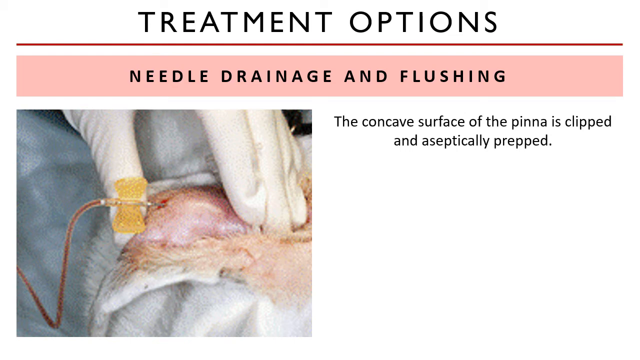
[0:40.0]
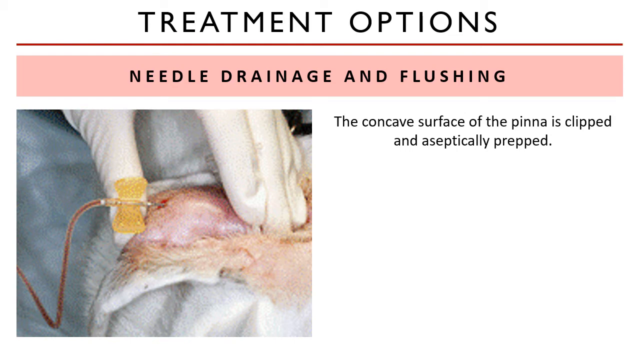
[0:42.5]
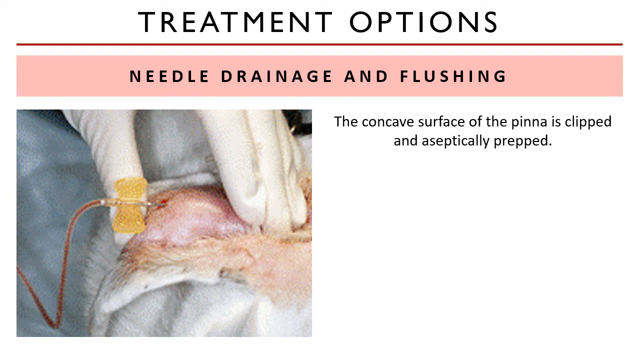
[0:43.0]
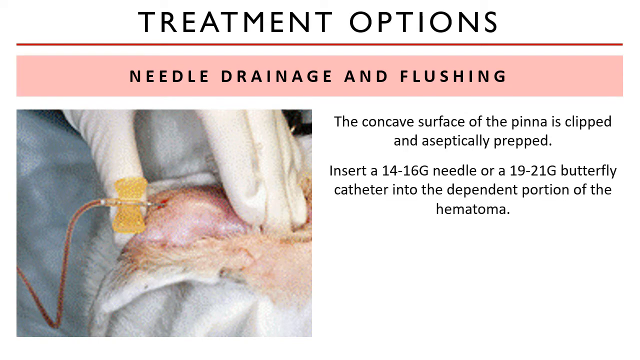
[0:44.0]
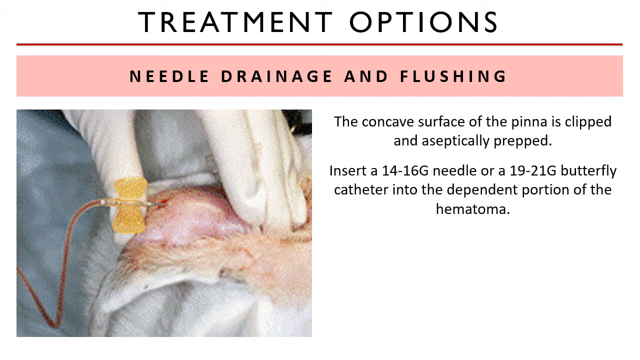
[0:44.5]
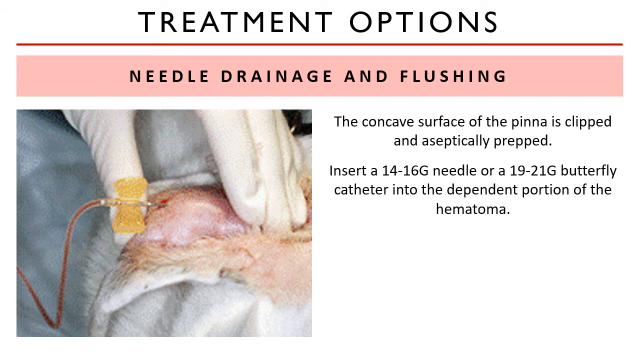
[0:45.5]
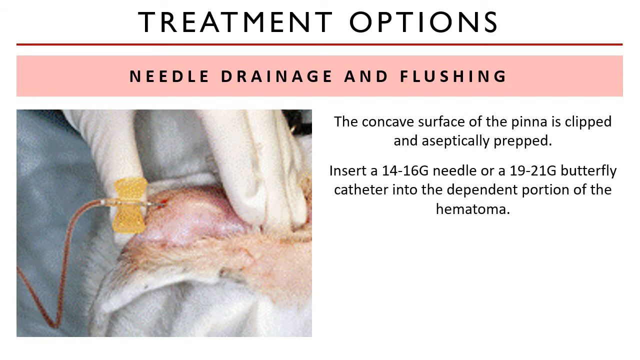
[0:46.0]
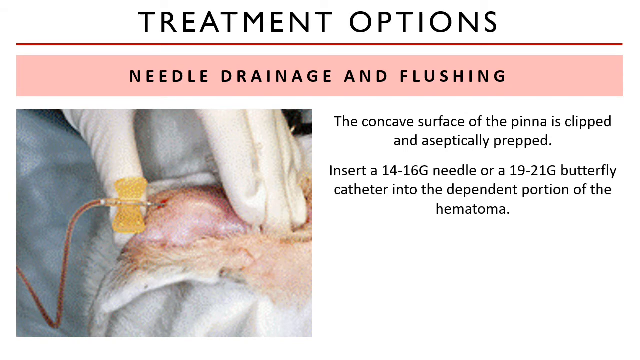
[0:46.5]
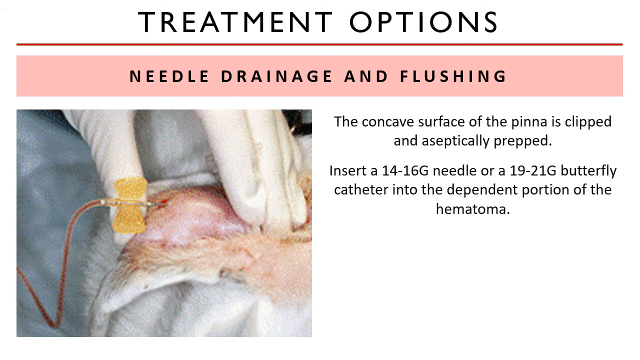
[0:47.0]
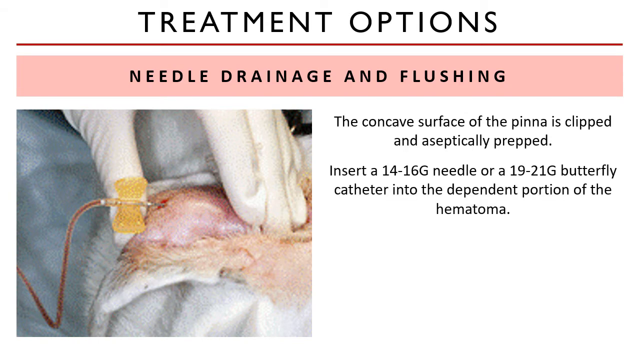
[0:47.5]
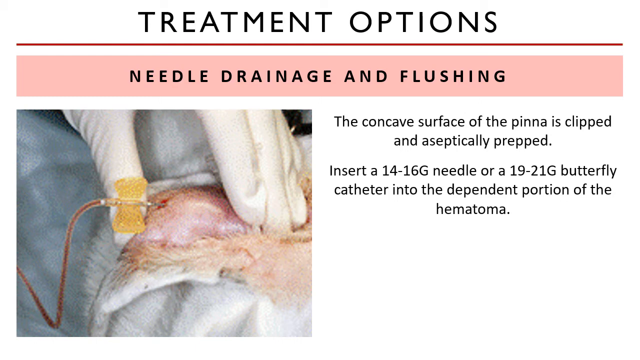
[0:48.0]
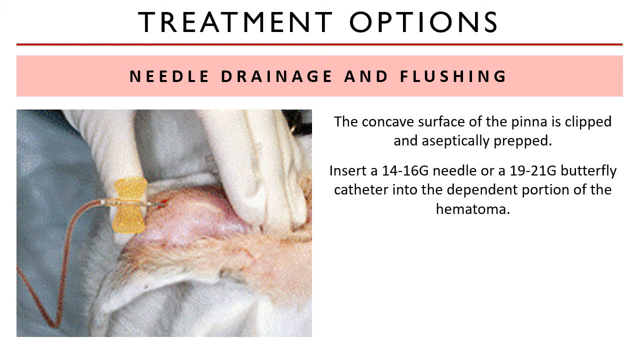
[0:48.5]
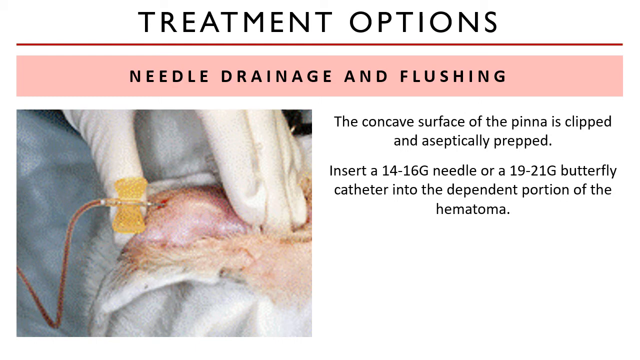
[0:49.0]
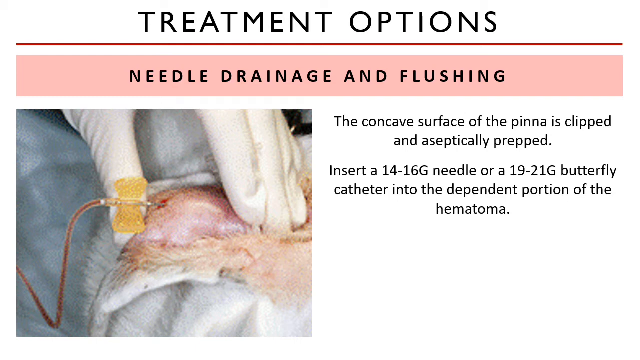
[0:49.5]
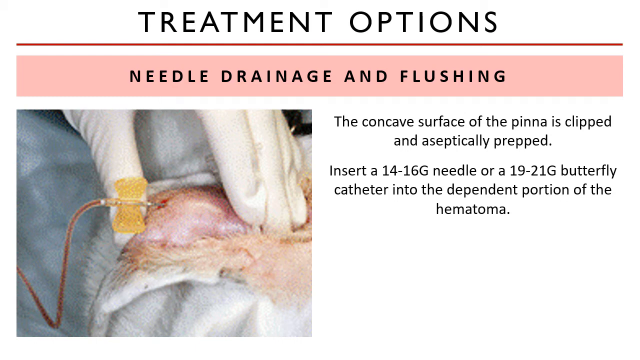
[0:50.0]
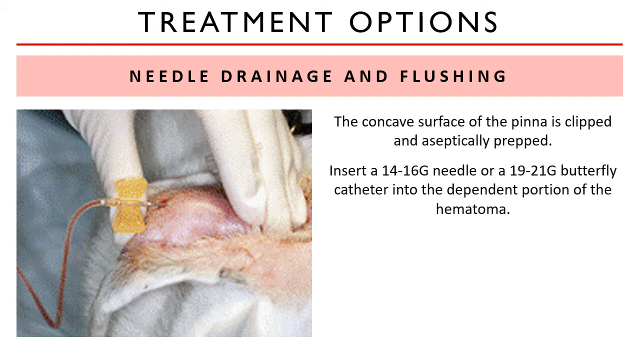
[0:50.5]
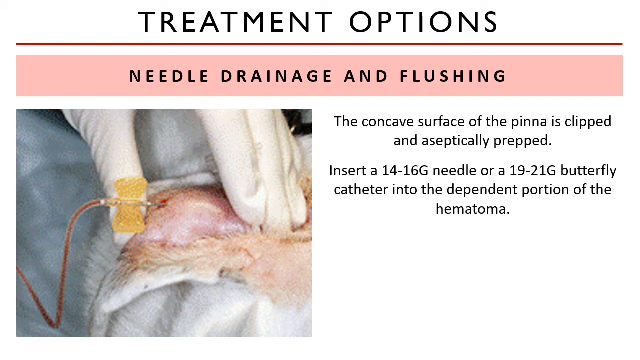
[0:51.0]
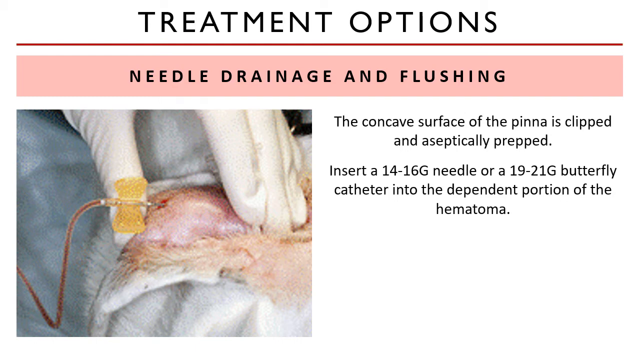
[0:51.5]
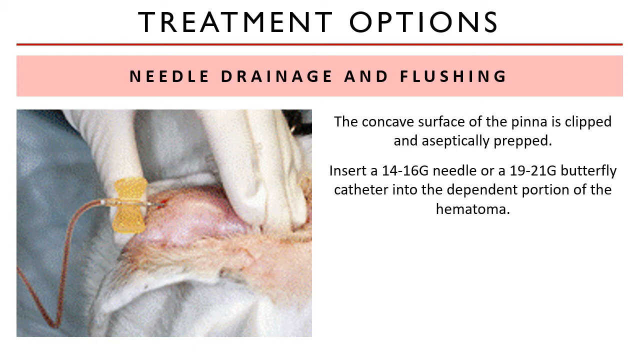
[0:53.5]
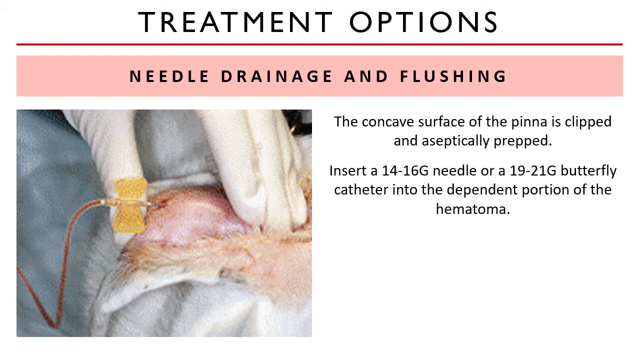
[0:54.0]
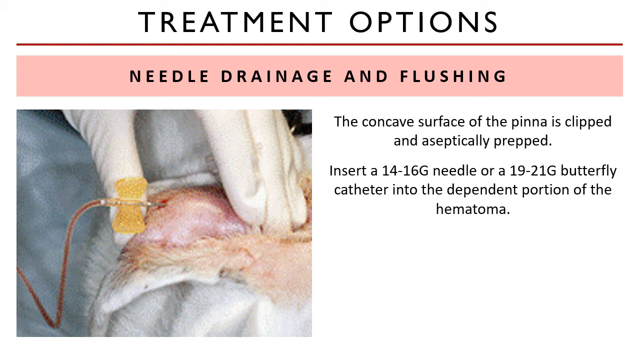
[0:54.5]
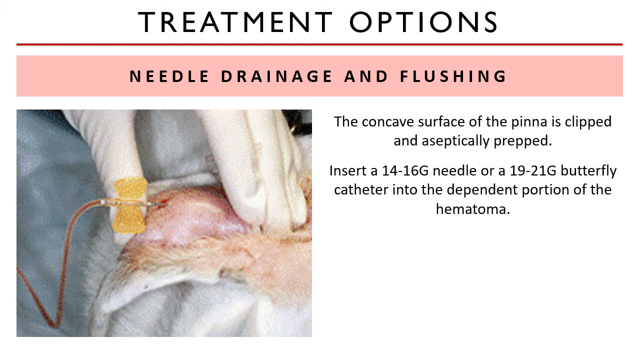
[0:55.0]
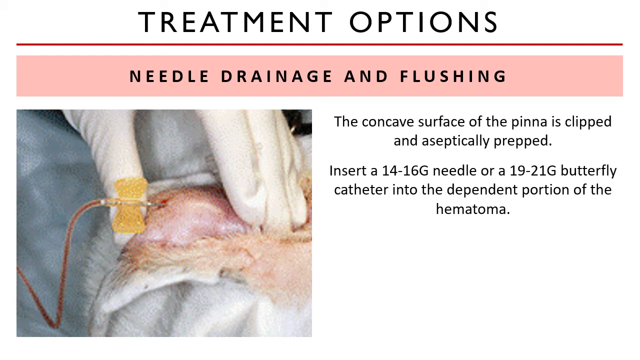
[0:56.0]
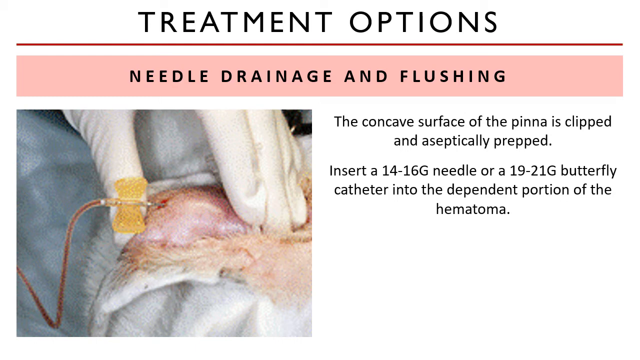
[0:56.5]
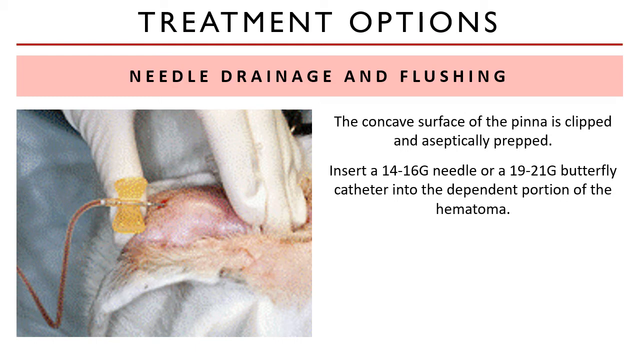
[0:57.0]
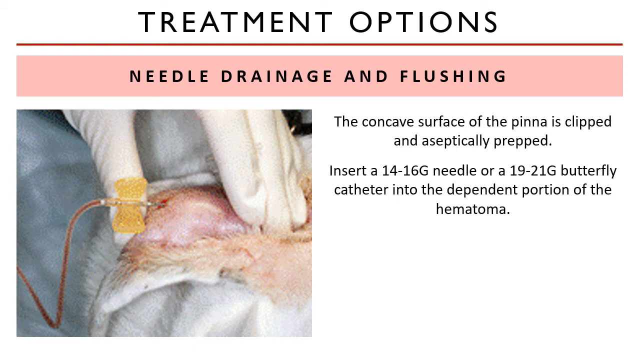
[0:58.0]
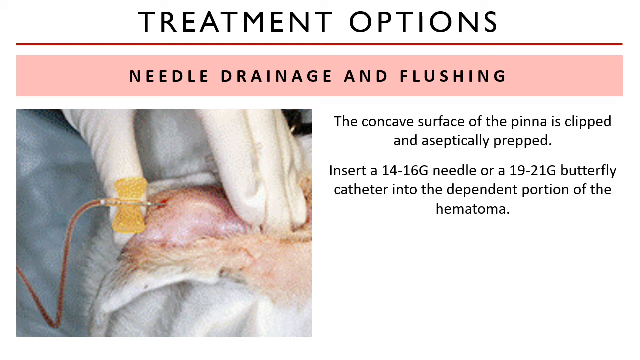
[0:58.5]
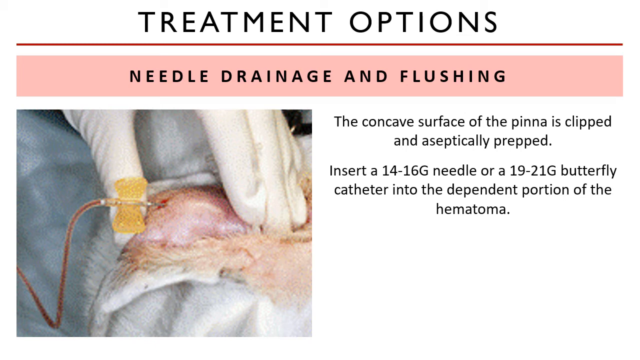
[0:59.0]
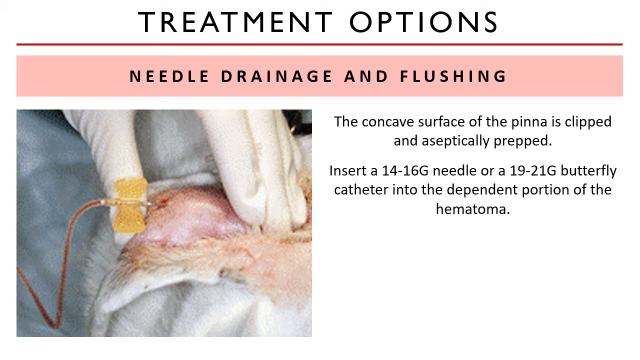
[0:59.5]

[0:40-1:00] The top part is the same, reading "treatment options" in black capital letters, with a thin red line across. The background turns white and then pink, and in the pink section, in black, it reads "needle drainage and flushing." The same picture appears, with text reading "the concave surface of the pinna is clipped" and "aseptically prep," then "insert a 14-16G needle or a 19-21G butterfly catheter into the dependent portion of the hematoma." The needle in the picture looks like it has a yellow bow attached to it.